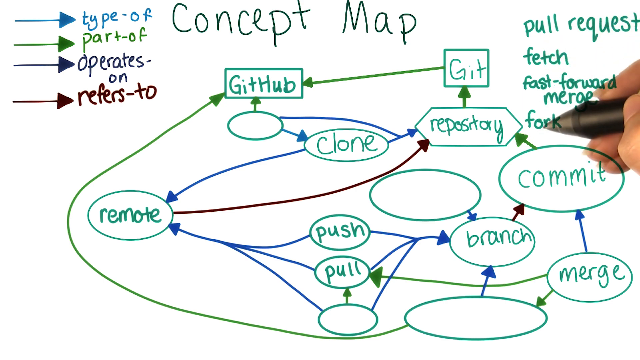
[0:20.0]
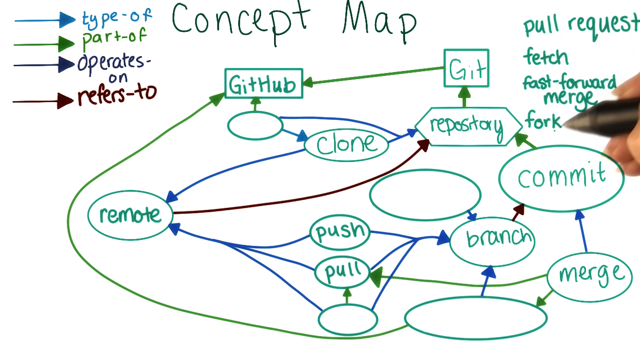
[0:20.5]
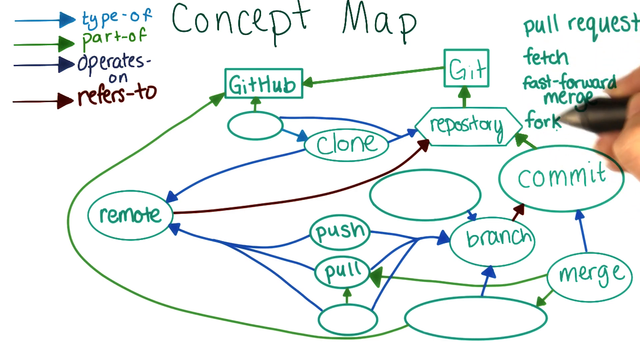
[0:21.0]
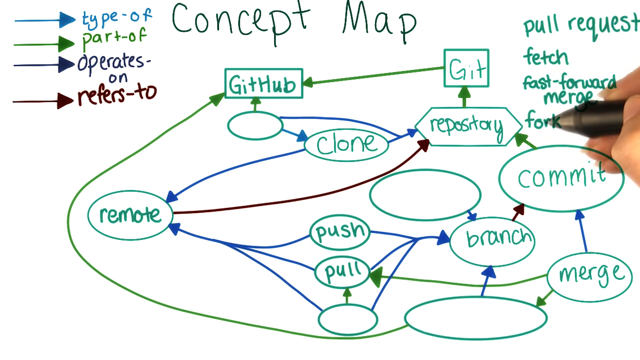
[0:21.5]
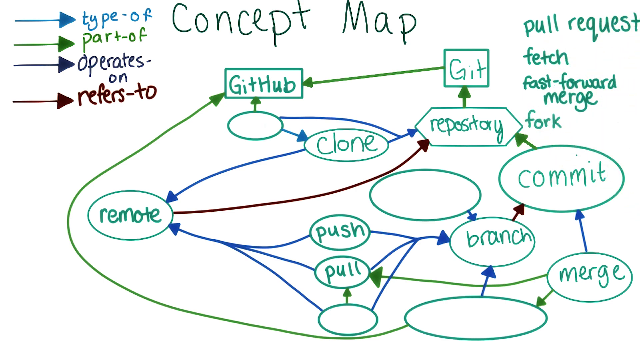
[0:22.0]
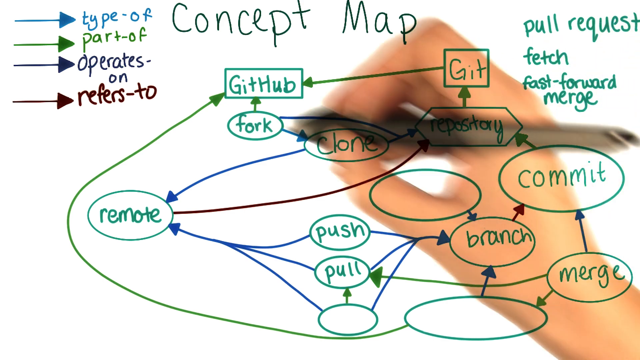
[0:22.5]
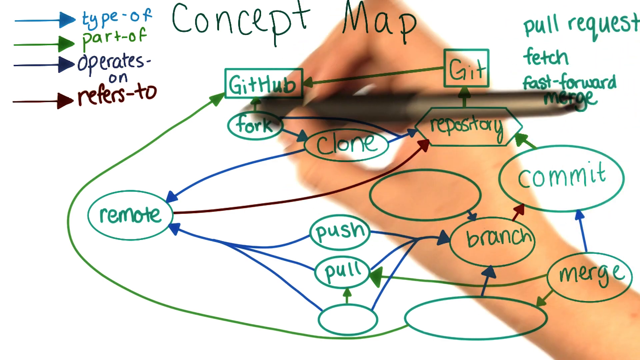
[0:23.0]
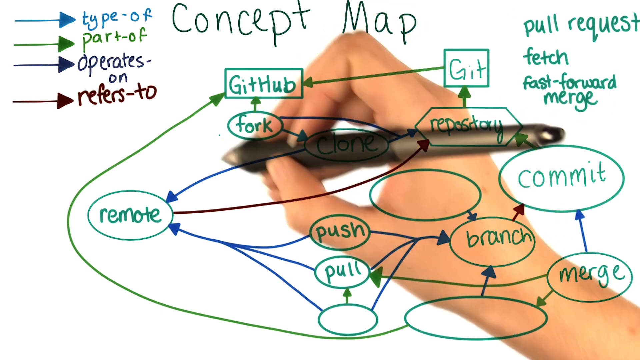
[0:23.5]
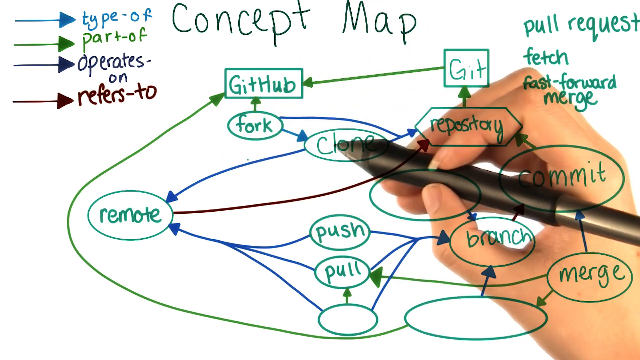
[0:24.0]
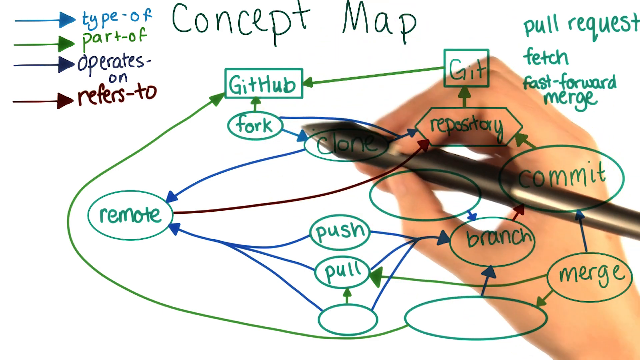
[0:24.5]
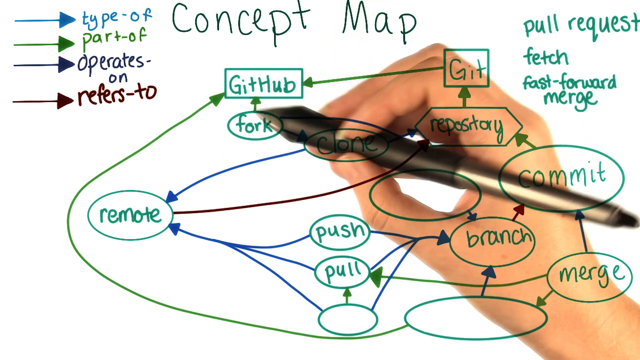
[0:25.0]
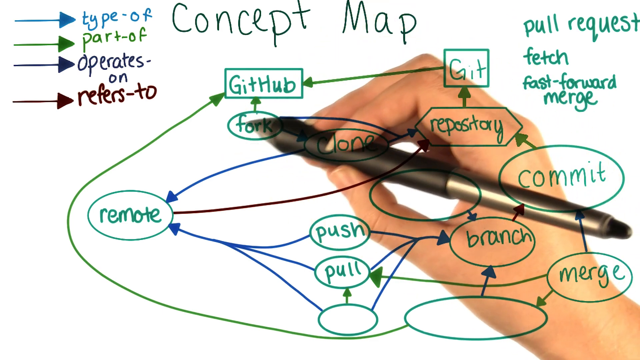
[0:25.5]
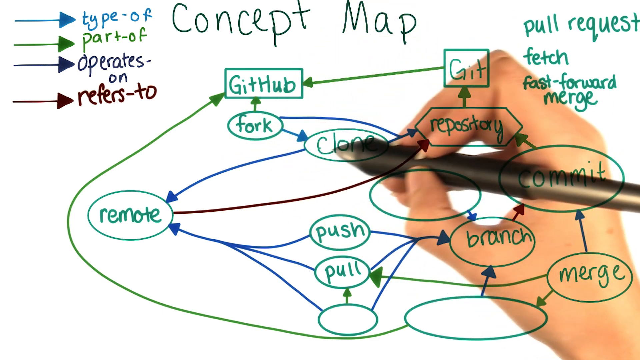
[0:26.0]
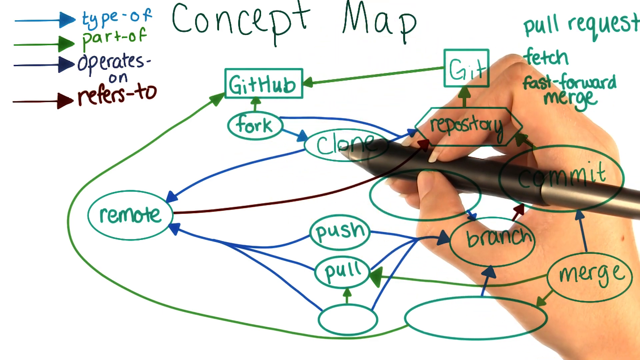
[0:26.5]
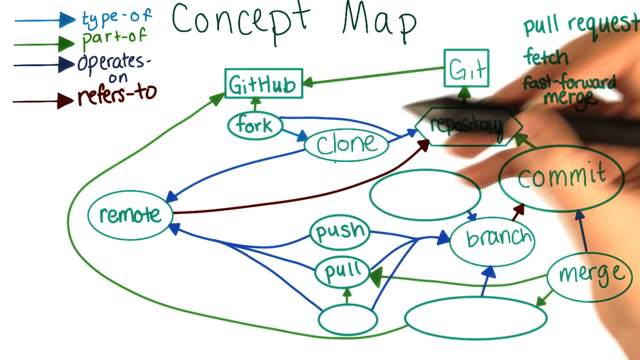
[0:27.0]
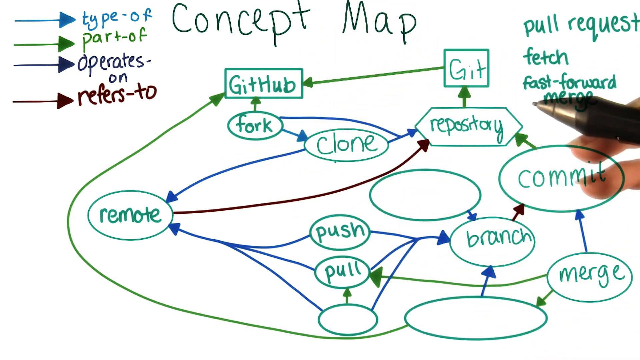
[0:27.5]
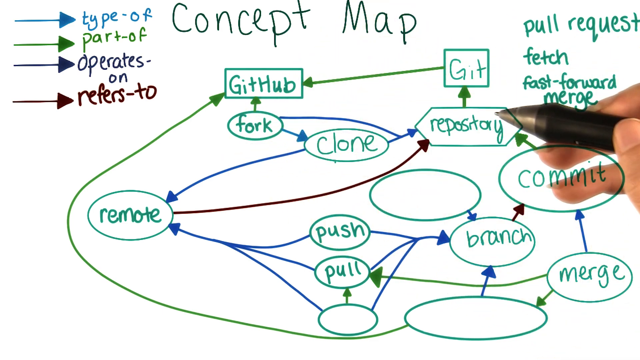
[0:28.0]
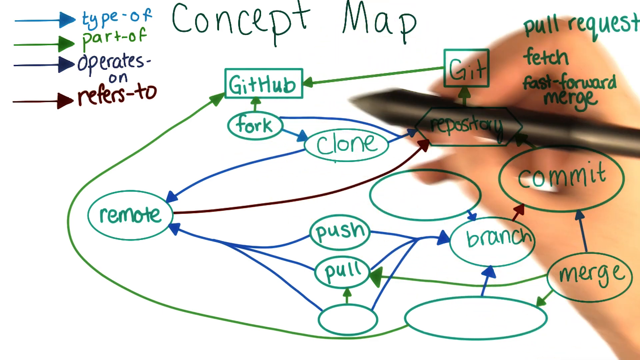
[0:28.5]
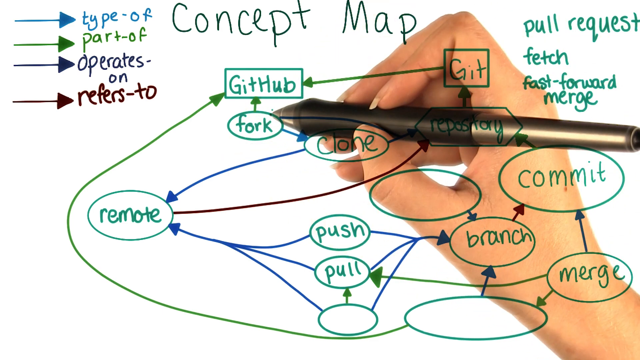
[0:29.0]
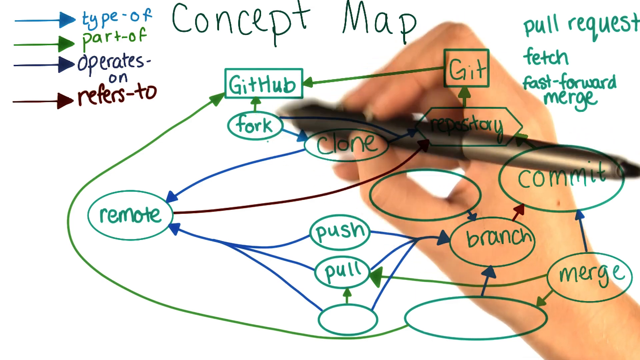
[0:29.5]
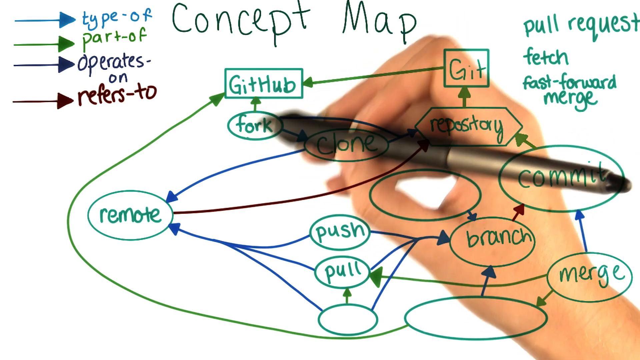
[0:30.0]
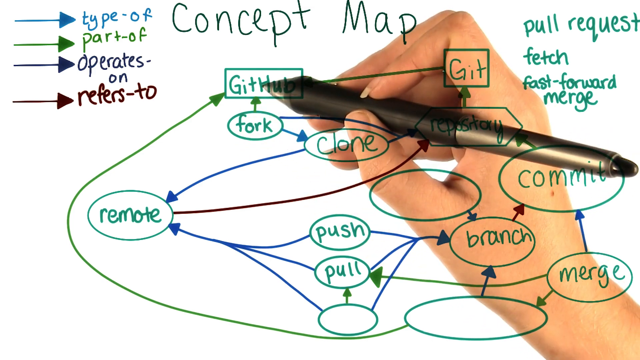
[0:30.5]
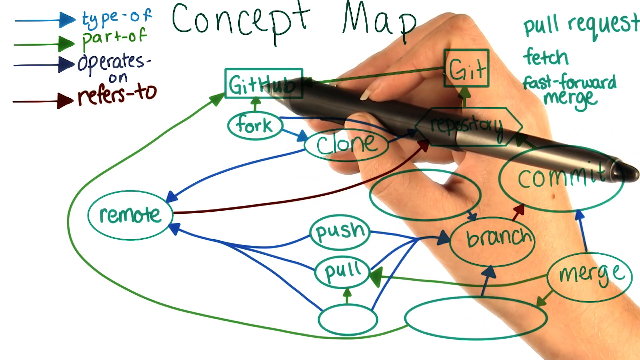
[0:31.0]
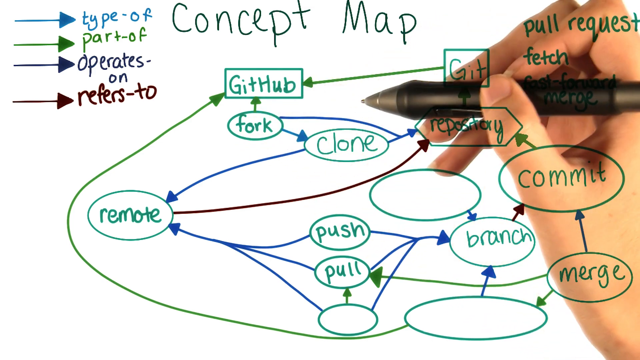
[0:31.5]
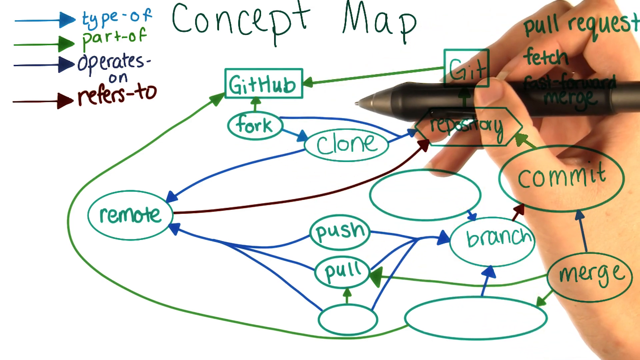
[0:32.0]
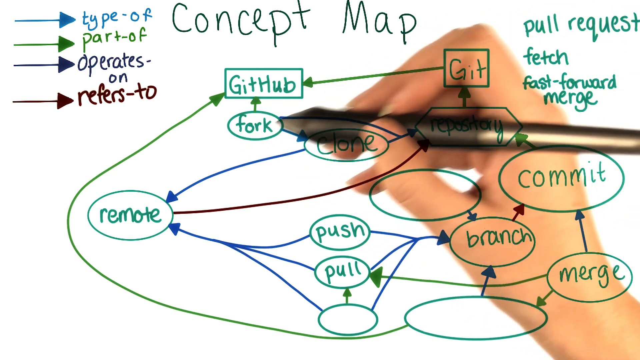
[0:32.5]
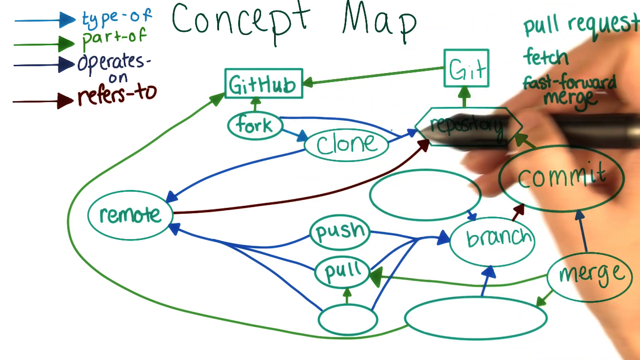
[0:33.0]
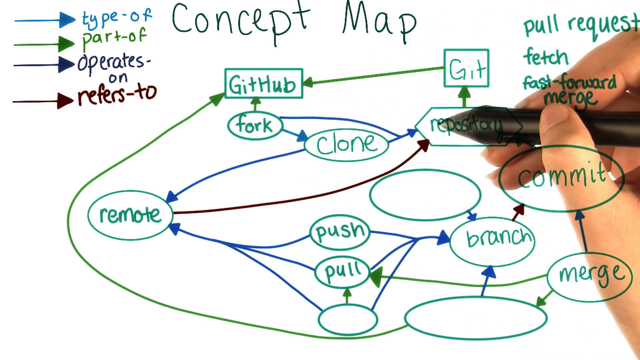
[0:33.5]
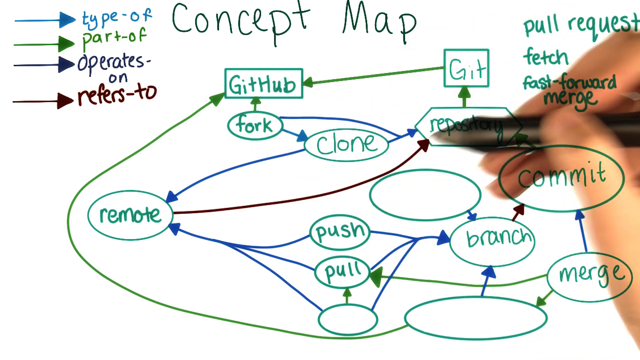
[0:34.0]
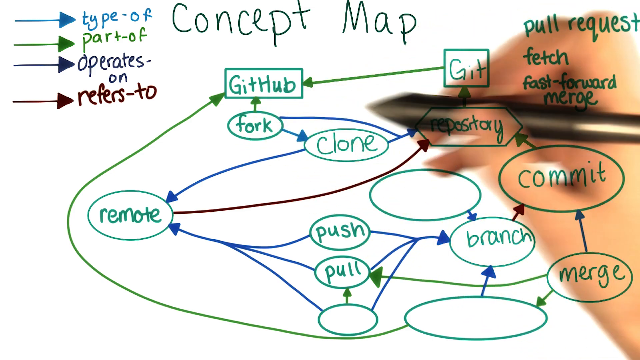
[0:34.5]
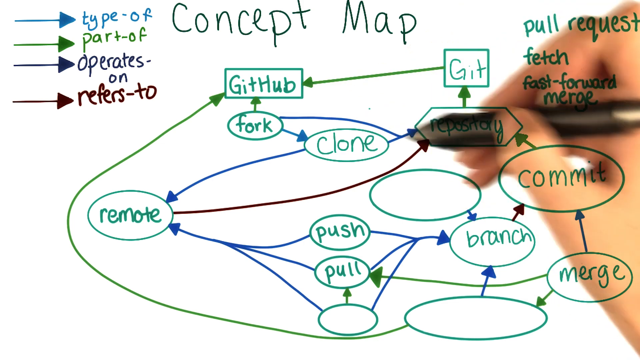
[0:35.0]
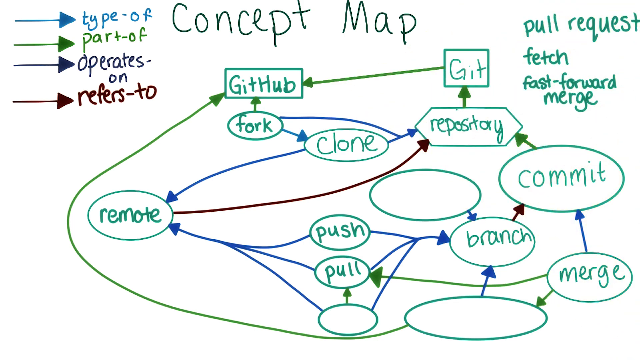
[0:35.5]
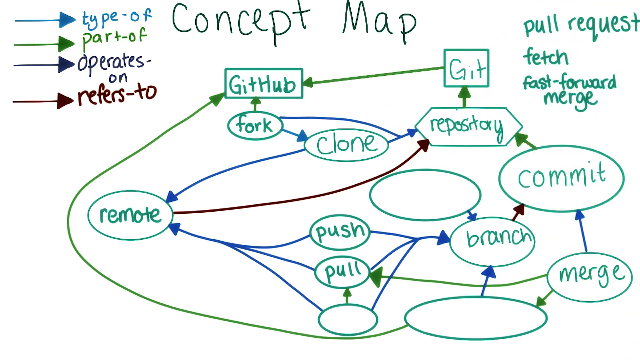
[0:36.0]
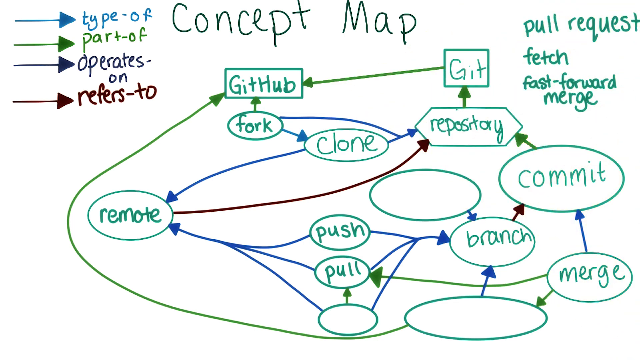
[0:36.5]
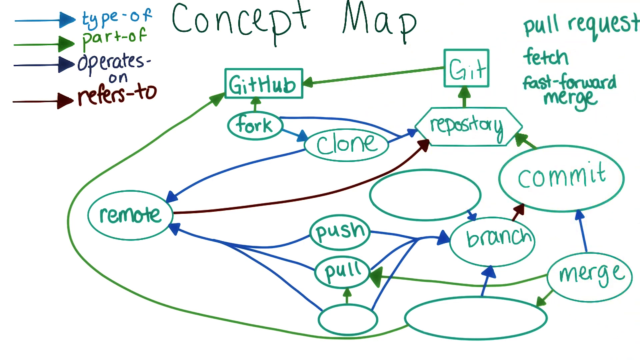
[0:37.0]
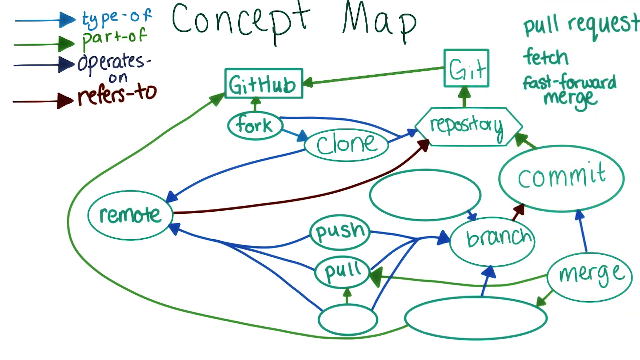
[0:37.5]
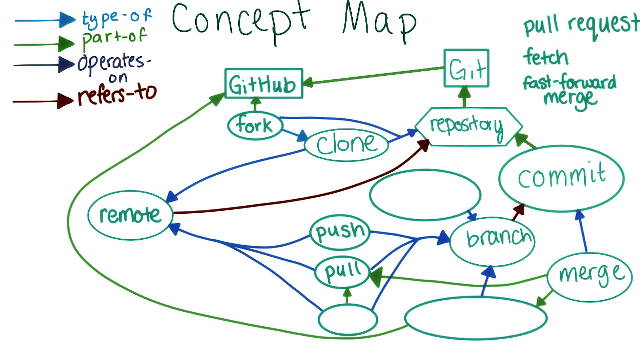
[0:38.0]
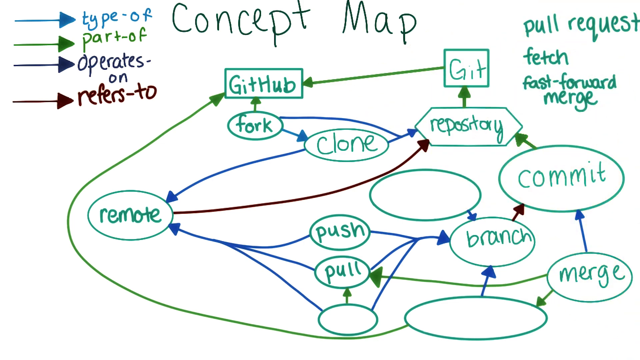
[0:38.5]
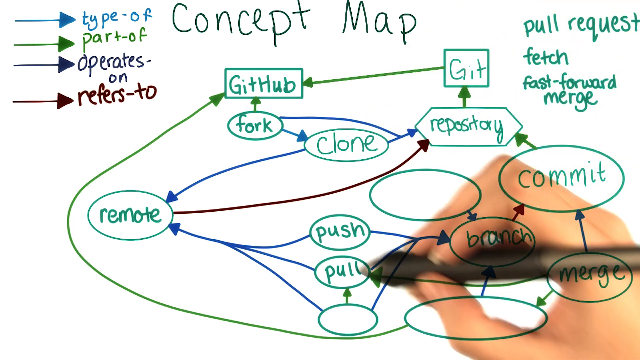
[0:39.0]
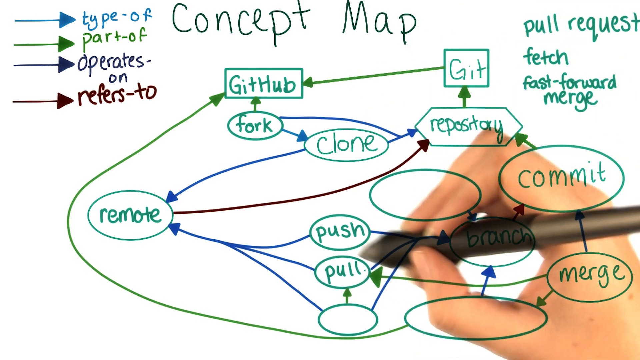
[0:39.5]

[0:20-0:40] The concept map is shown with its legend labels "type of," "part of," "operates on" and "refers to." A lady holds a black pen in her hand. The page has circles and squares, with different colored arrows going to different parts. She circles different parts, highlights, goes back and circles, and makes underline motions, moving from left to right. Arrows go from one area to the next, showing how the parts link to each other. She highlights words on the left, and when she hovers above the empty circle, it goes there. The words are written in green and the circles are also green.